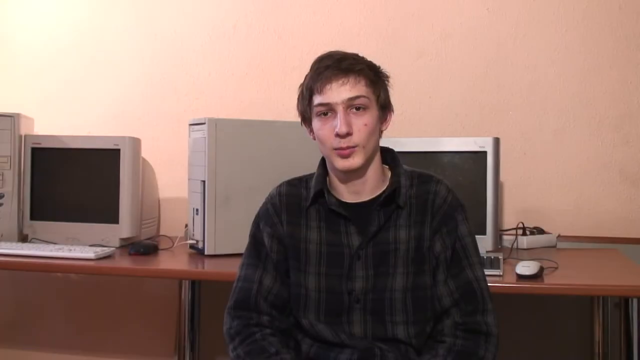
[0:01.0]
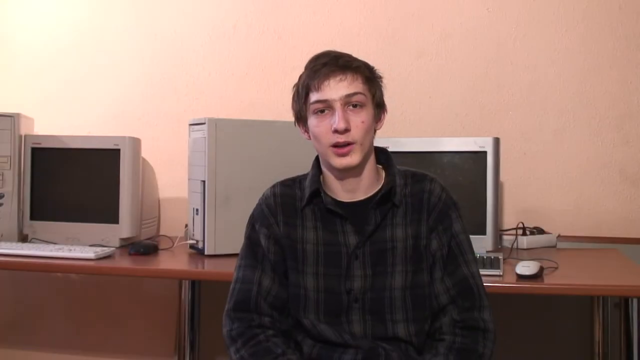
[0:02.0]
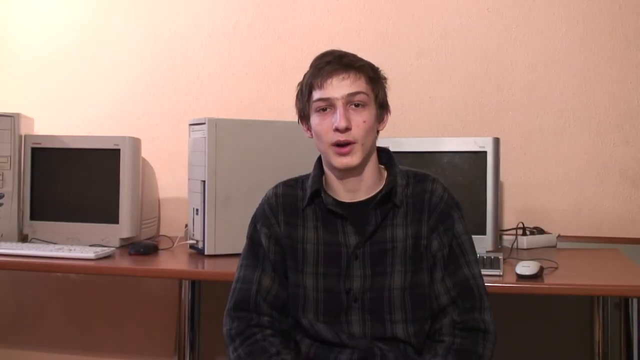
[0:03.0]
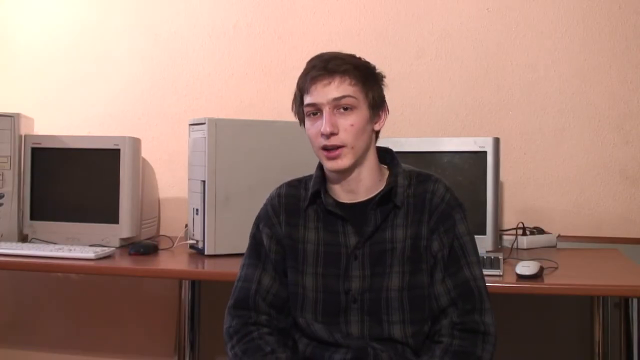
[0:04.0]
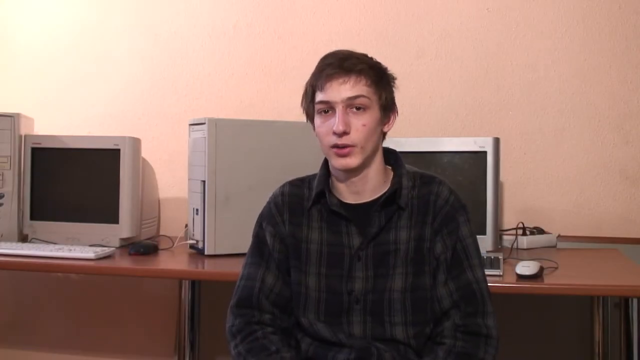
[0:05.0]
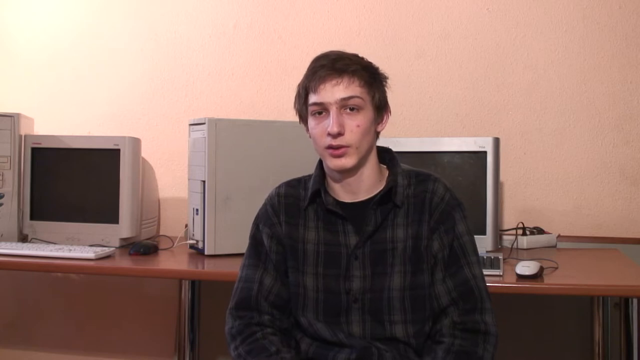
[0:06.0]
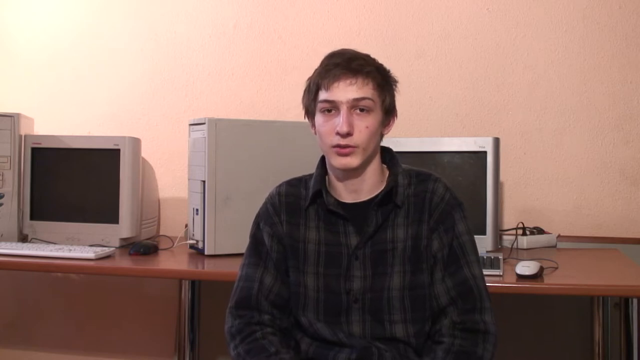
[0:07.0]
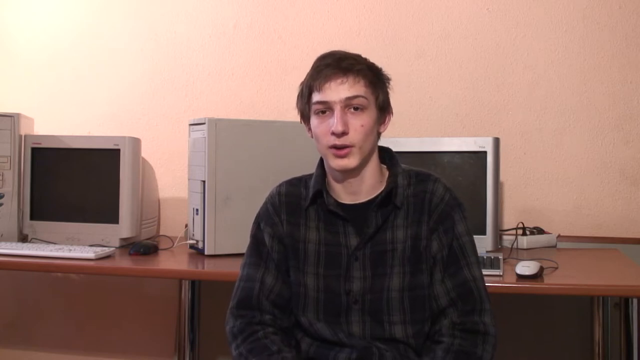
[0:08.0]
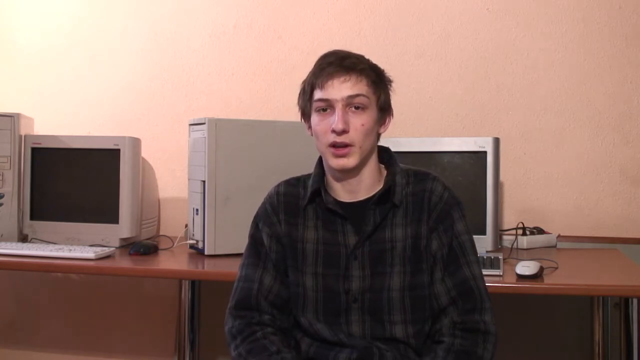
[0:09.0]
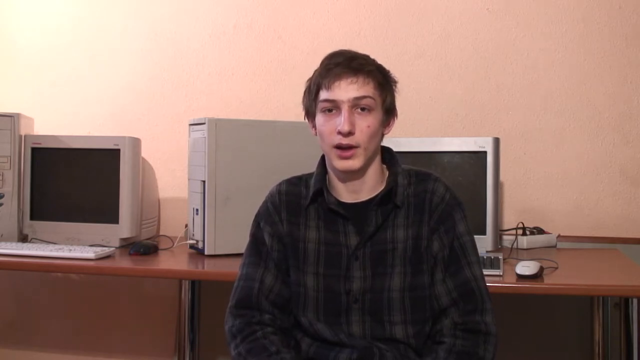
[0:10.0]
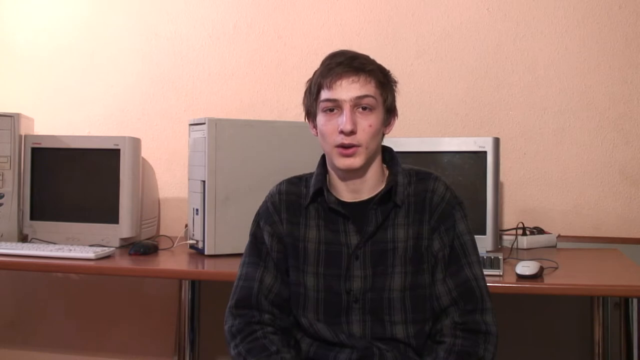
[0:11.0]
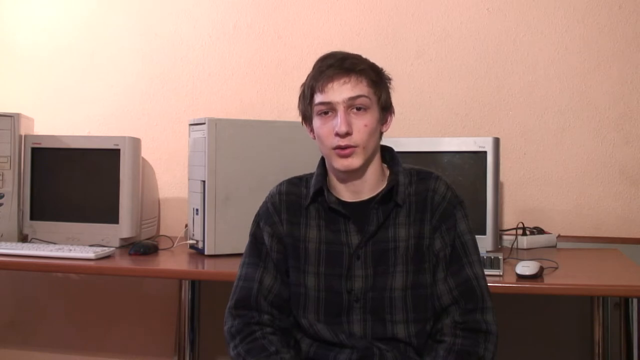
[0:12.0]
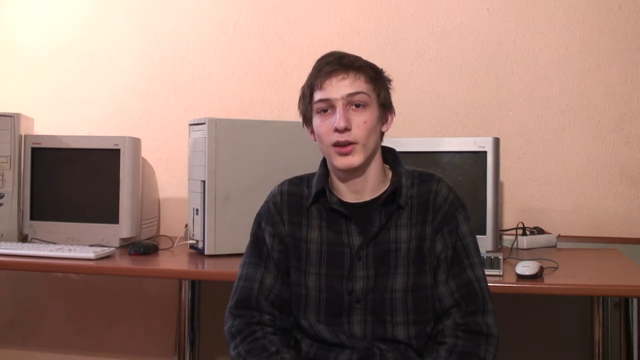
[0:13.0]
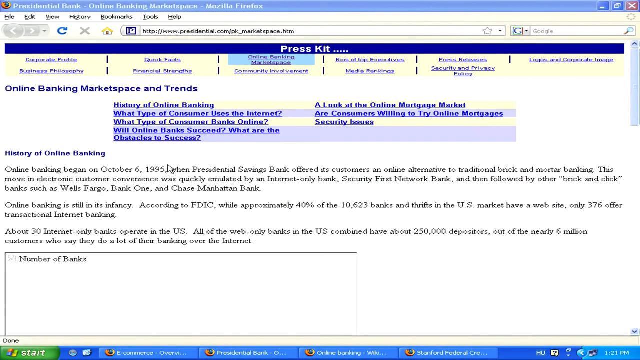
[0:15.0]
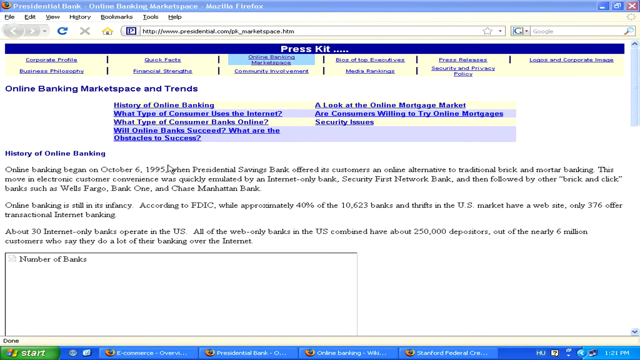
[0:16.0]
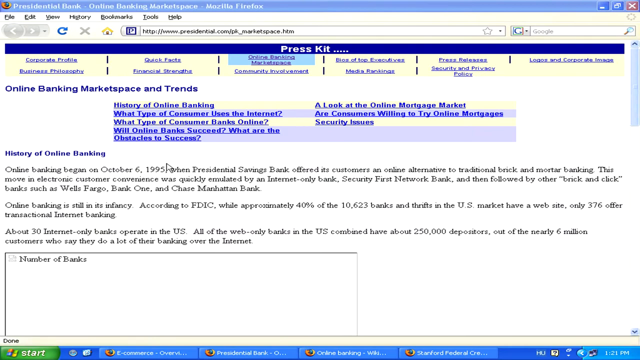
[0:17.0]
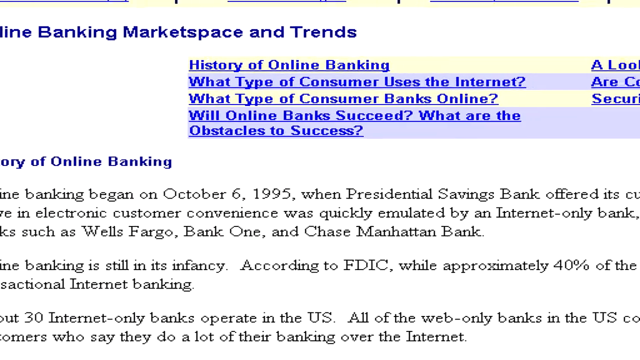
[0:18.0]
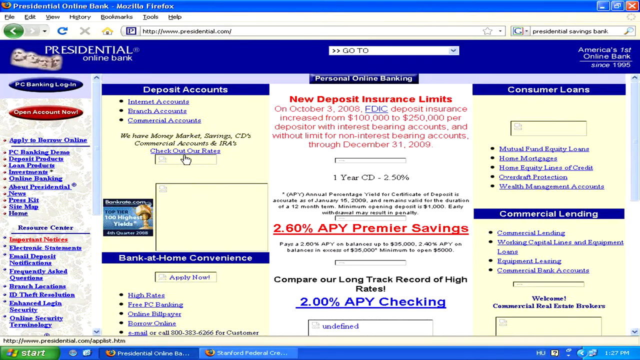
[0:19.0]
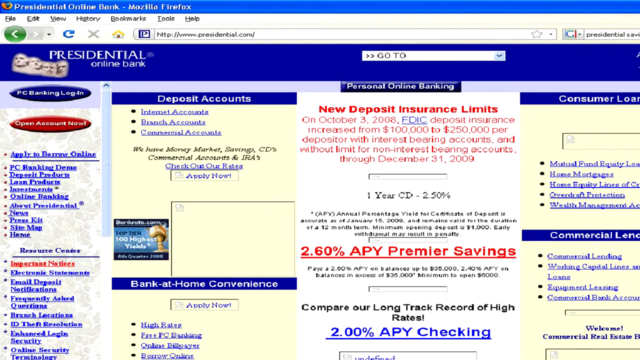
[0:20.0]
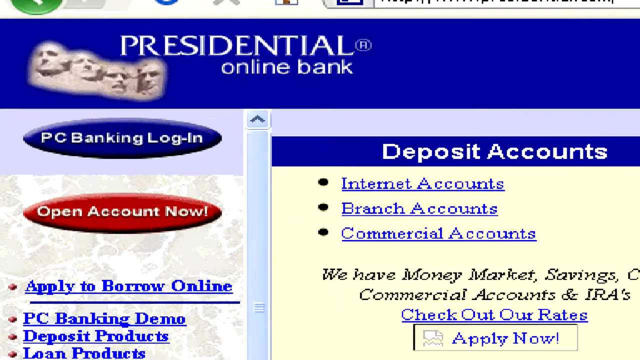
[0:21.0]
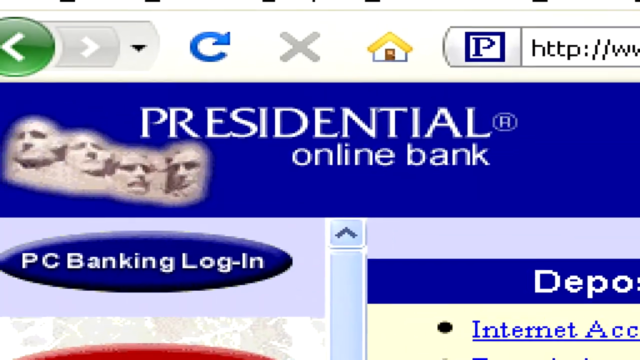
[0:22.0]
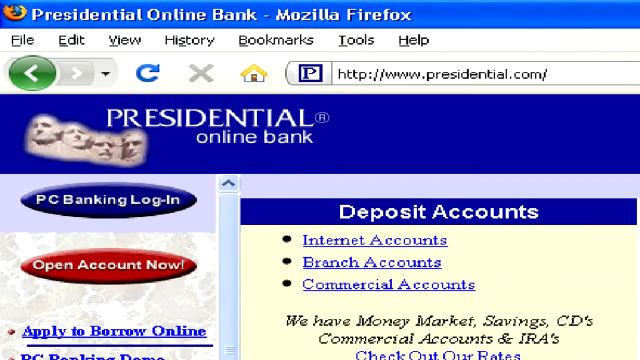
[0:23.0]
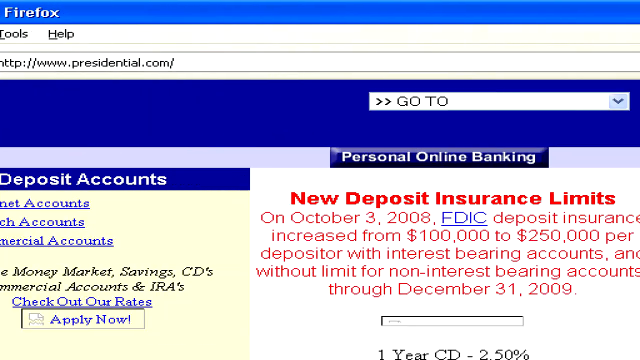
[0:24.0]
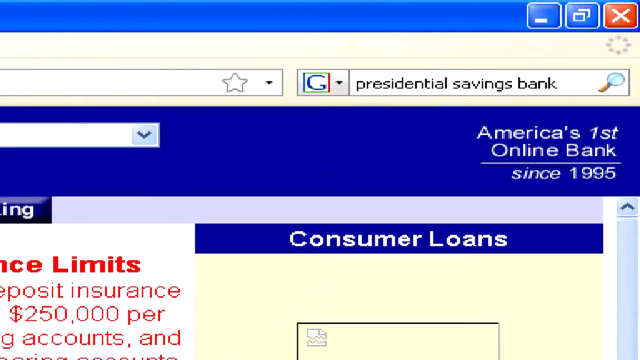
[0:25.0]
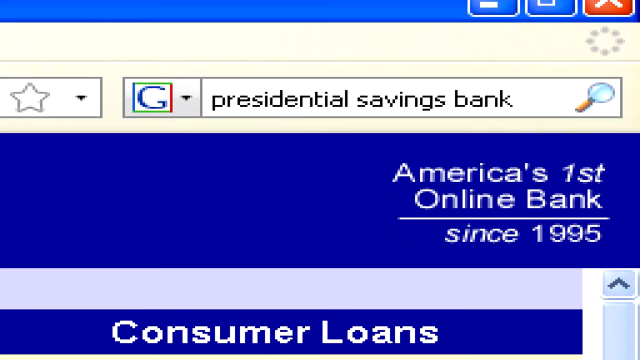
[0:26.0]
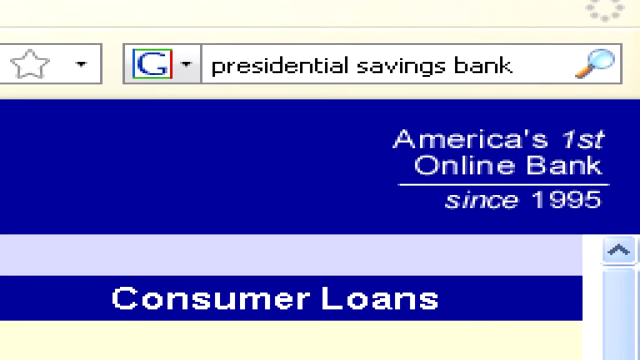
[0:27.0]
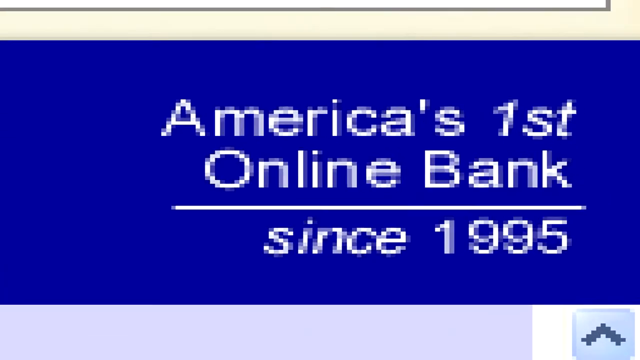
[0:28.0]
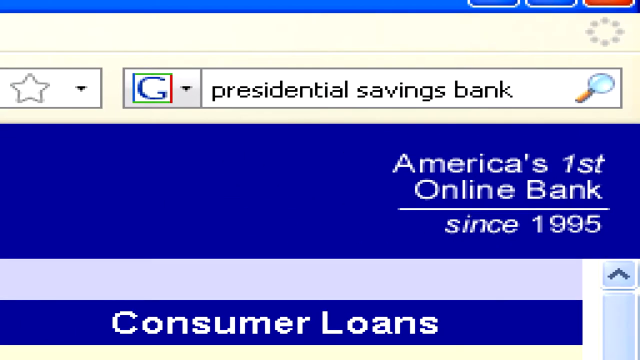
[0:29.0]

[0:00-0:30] A man is talking, with two computers in the background. He wears a black plaid shirt over a black undershirt; he has no facial hair but has a unibrow. A website titled "Online Banking Market Space and Trends" is then pulled up. It reads "Presidential Online Bank" and lists different deposit amounts and consumer loans, and it says it is "America's first online bank since 1995." The website looks very outdated.